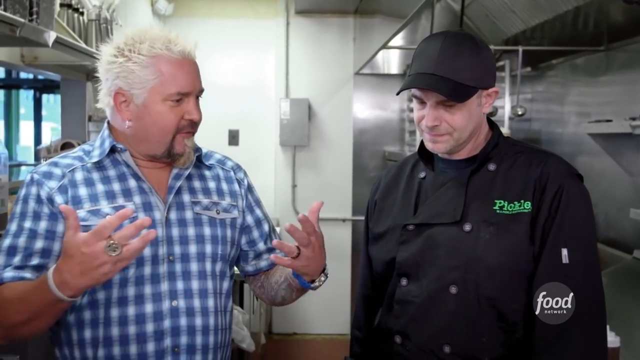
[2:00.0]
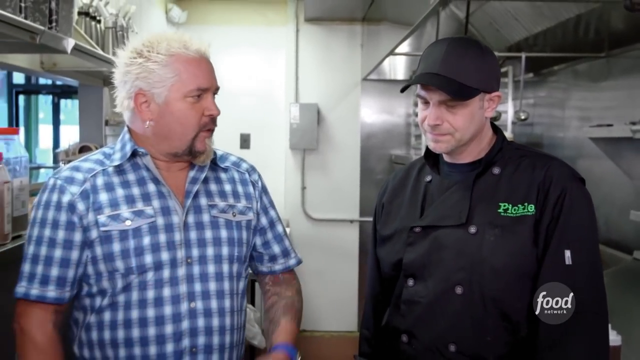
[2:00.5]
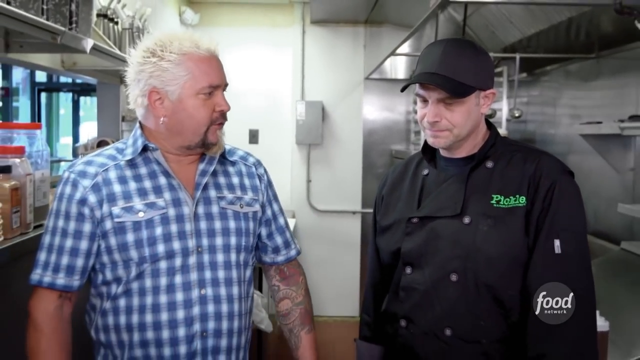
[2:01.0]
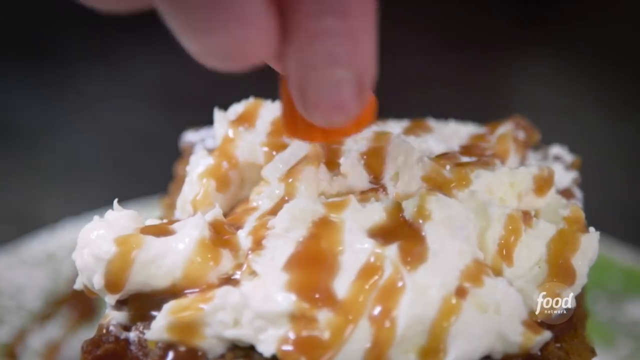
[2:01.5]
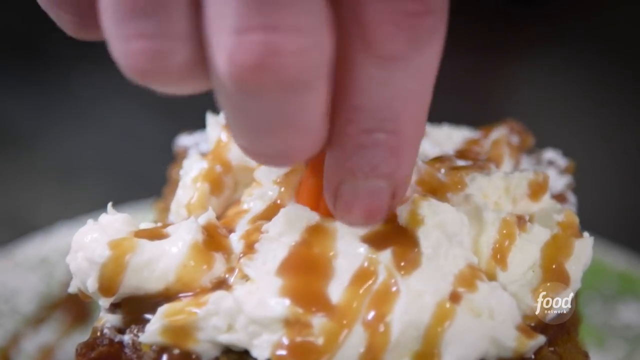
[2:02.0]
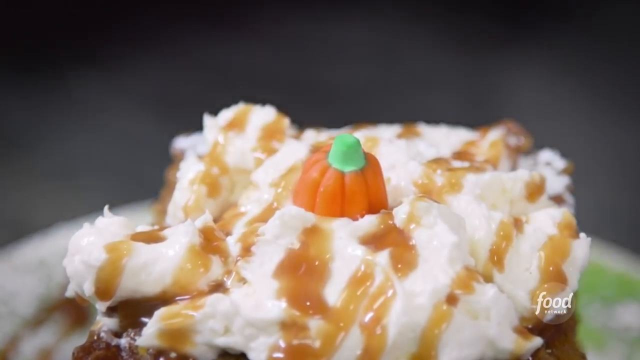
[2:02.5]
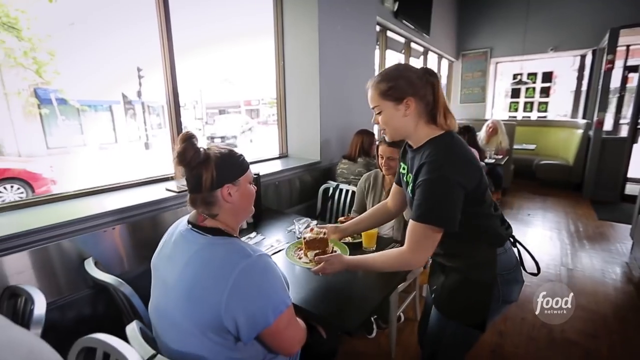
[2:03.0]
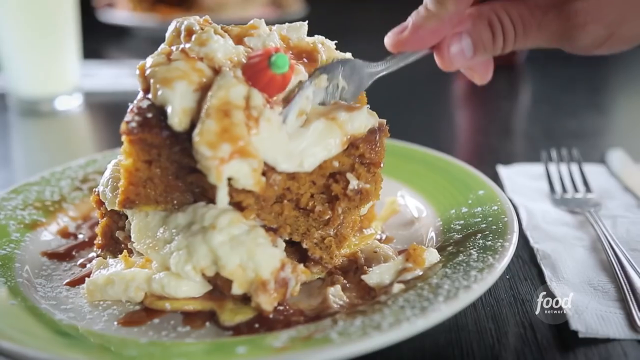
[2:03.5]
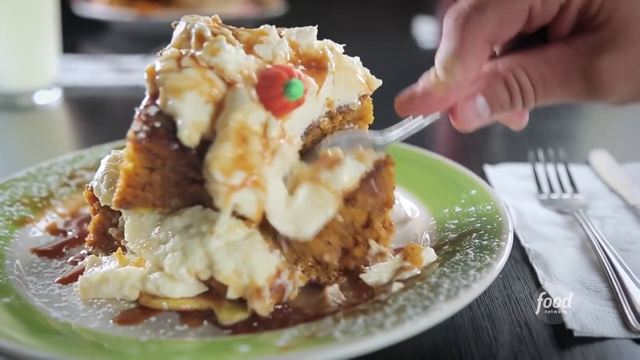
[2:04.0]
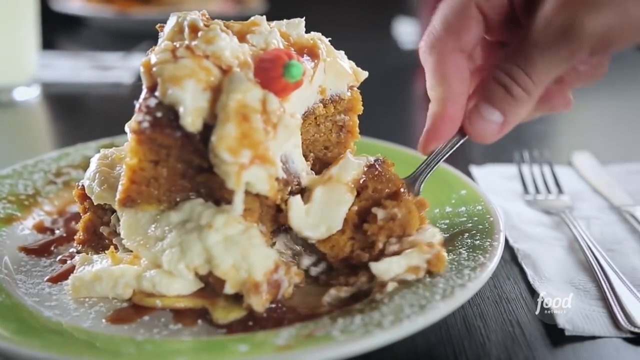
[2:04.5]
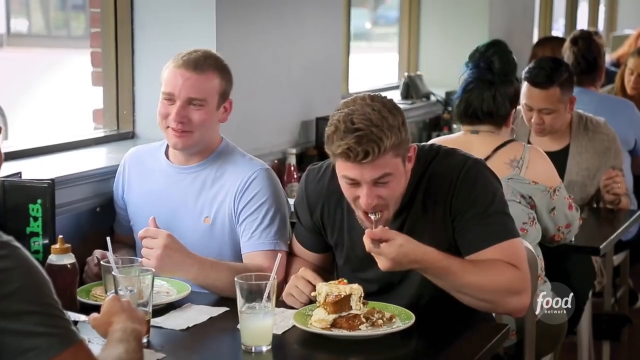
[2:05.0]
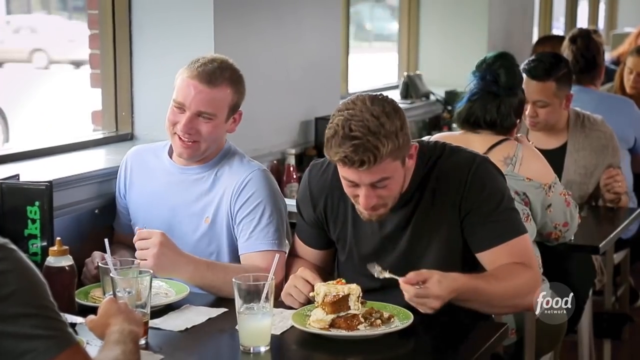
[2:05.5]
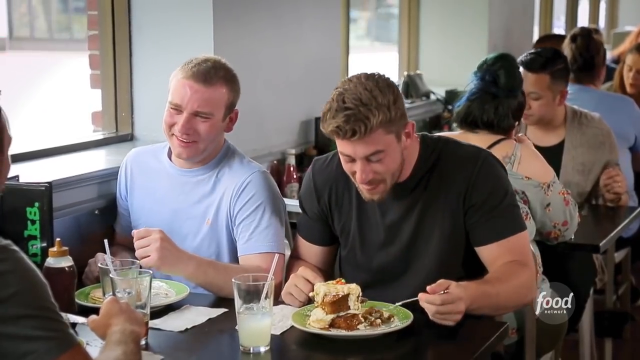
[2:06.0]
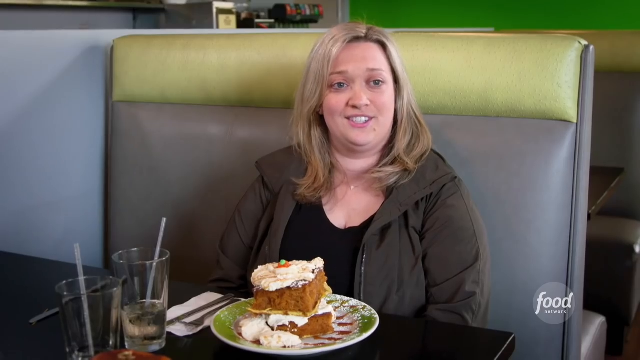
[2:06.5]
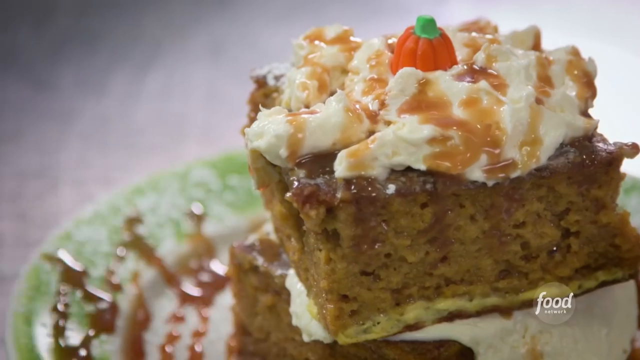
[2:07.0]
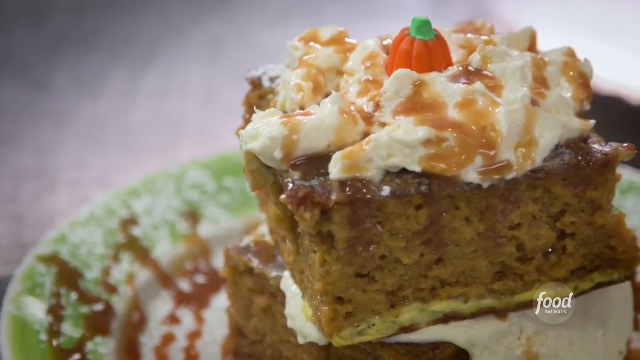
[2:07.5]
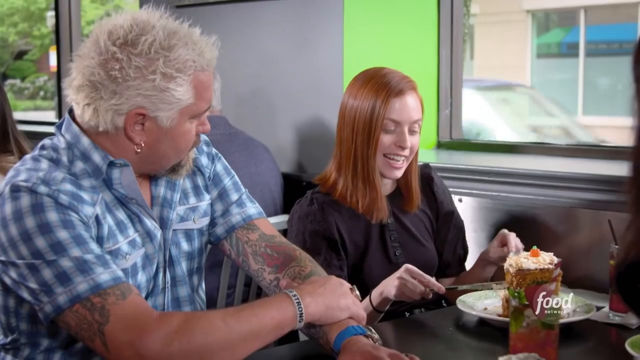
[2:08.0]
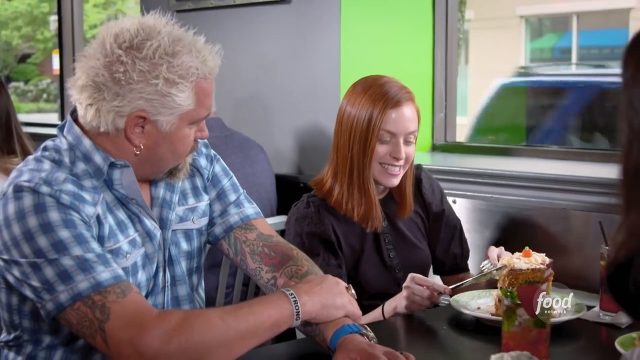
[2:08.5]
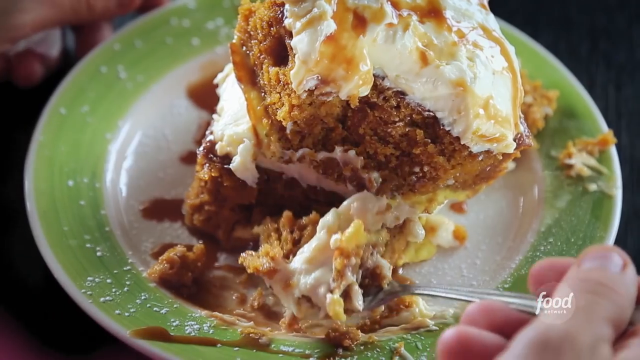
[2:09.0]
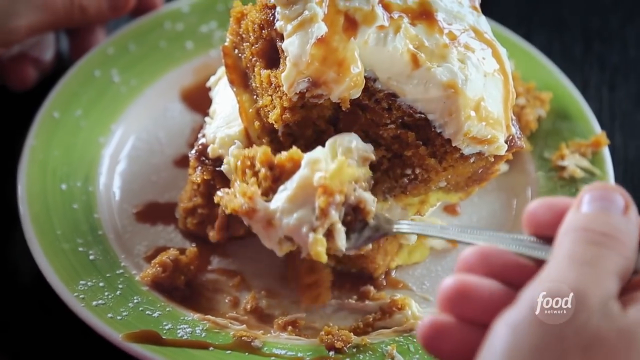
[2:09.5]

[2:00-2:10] Guy Fieri speaks to the chef. Apparently a small candied pumpkin, not a marzipan carrot, is placed on top of the cake. Lots of people inside the restaurant eat the cake, smiling and looking happy to be there. A few of them look like professionals, probably lawyers or other people who work downtown.